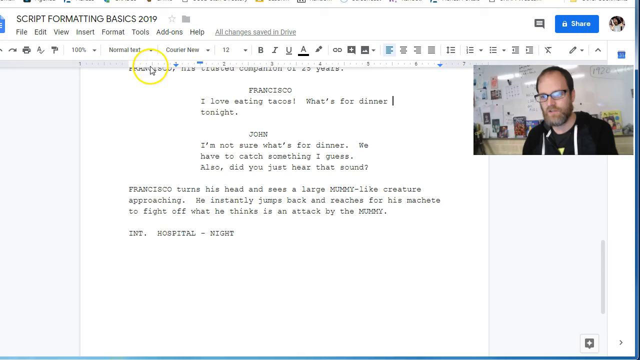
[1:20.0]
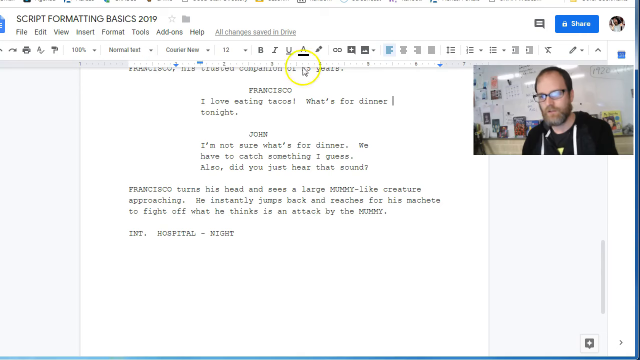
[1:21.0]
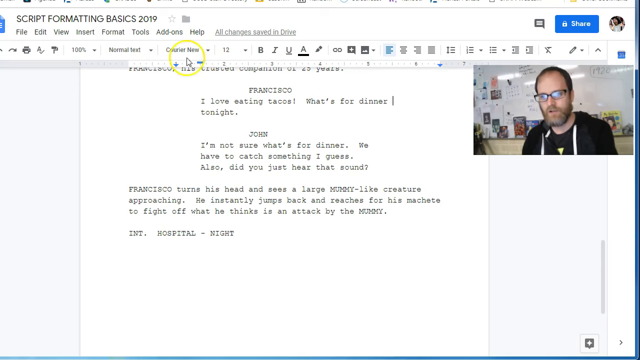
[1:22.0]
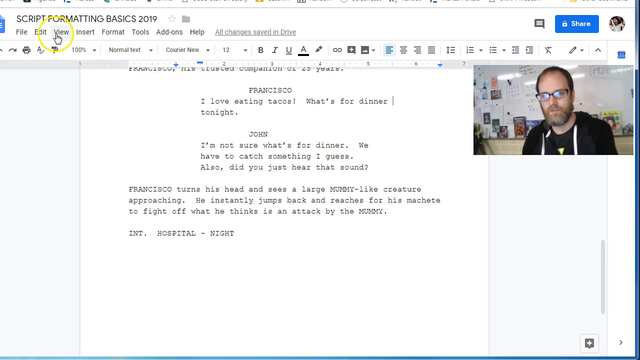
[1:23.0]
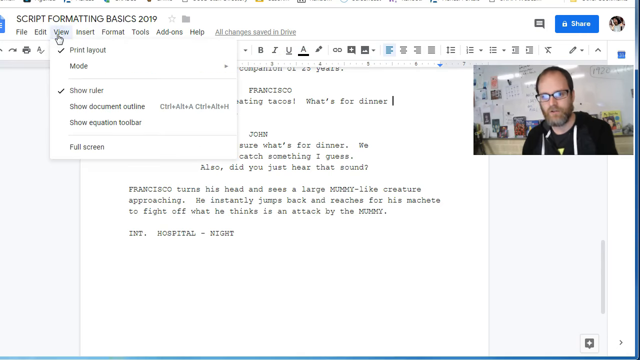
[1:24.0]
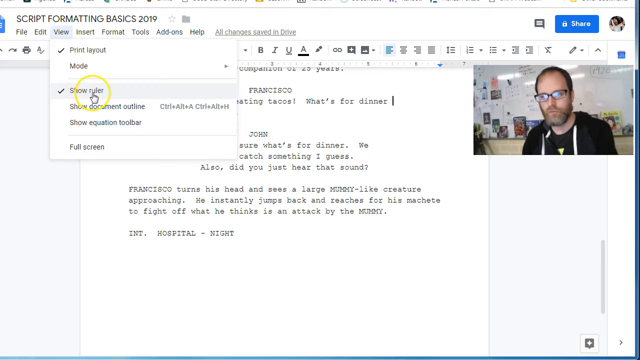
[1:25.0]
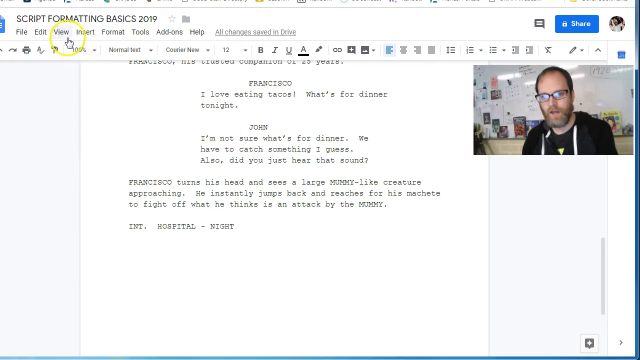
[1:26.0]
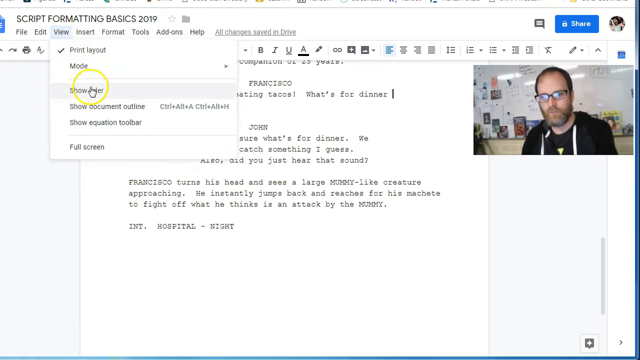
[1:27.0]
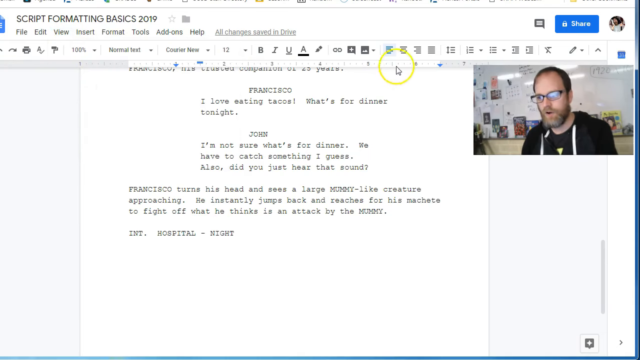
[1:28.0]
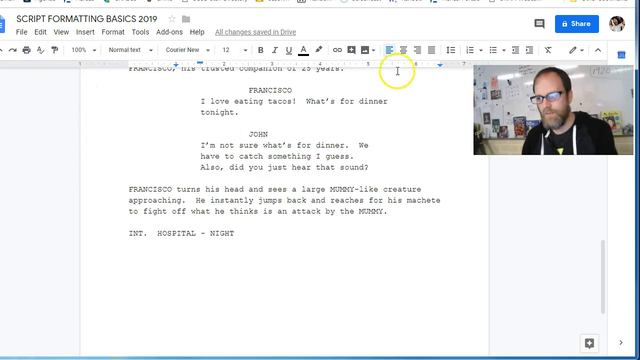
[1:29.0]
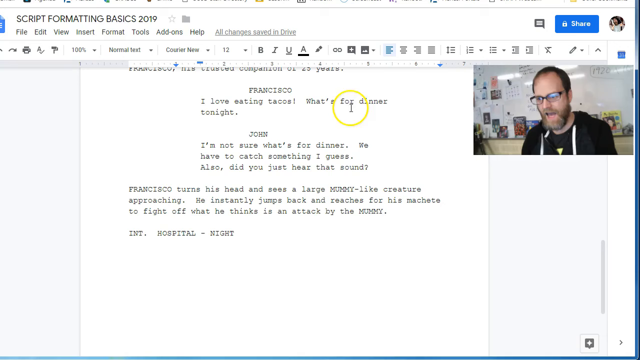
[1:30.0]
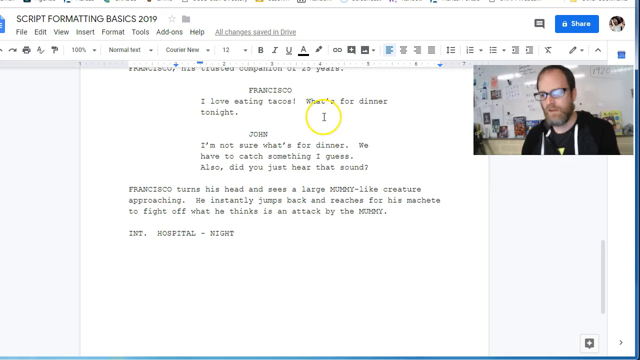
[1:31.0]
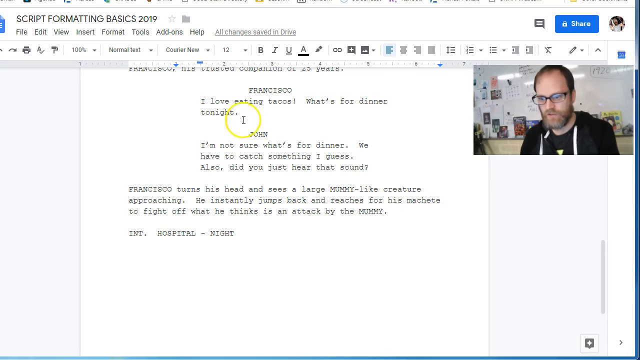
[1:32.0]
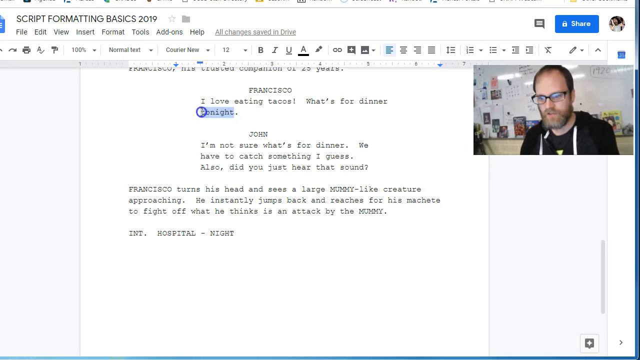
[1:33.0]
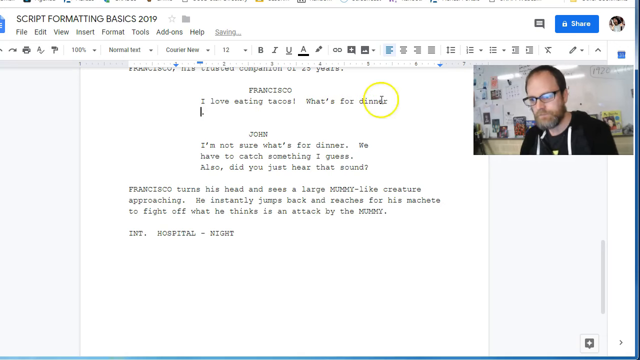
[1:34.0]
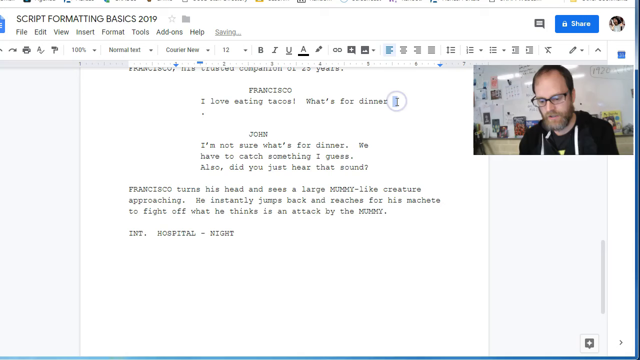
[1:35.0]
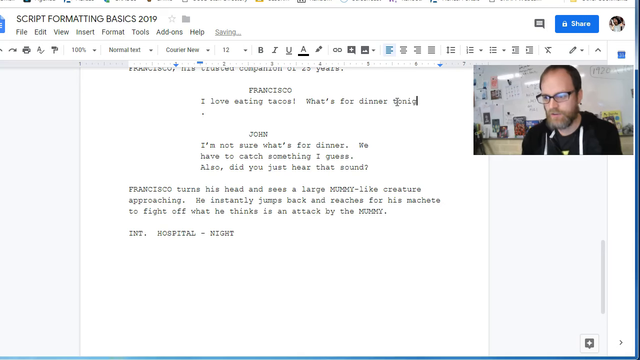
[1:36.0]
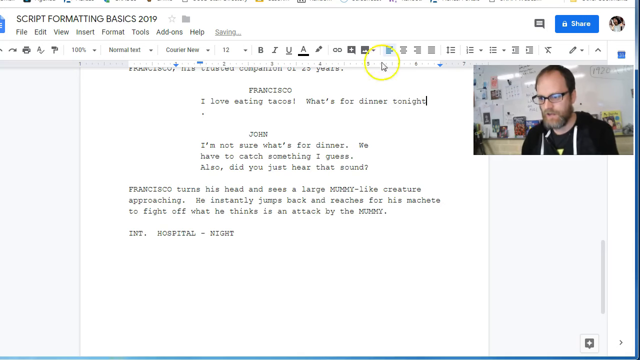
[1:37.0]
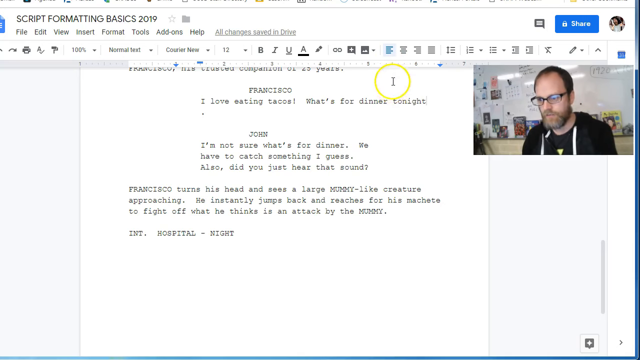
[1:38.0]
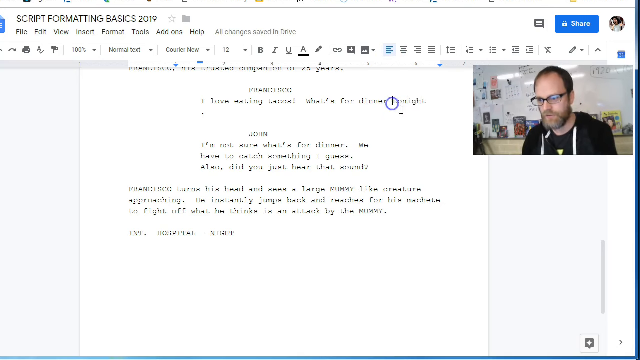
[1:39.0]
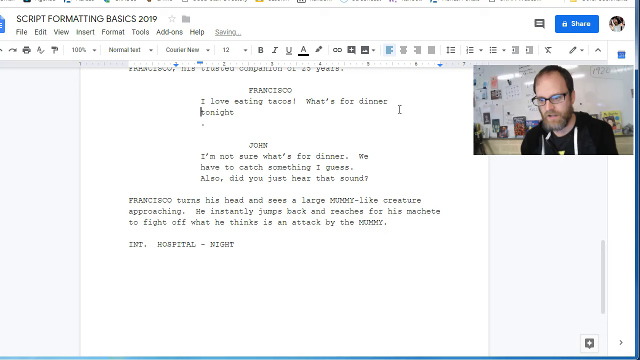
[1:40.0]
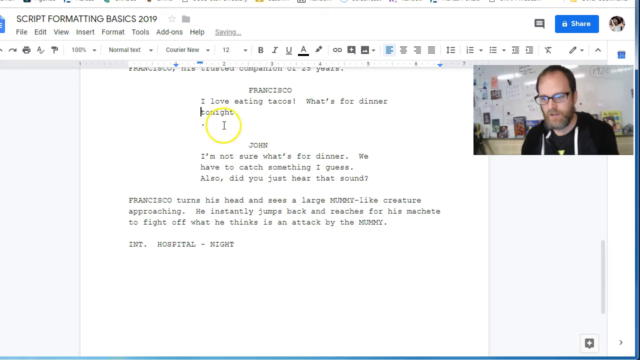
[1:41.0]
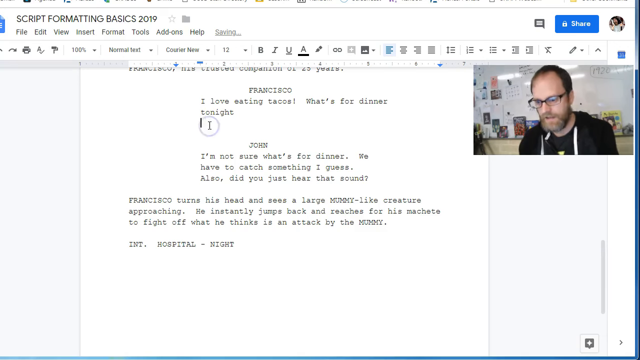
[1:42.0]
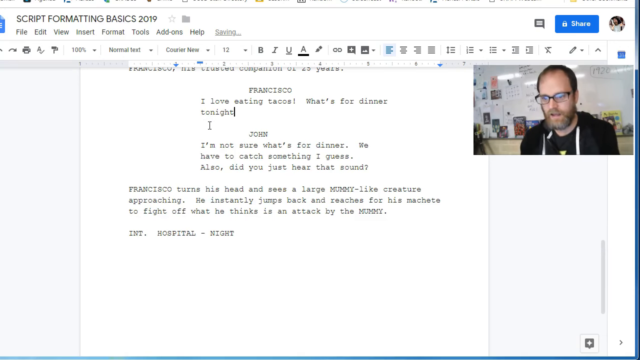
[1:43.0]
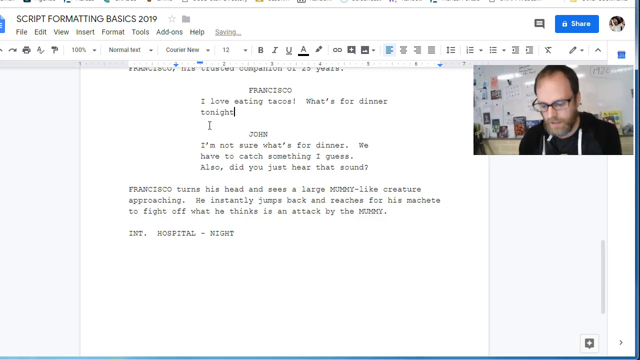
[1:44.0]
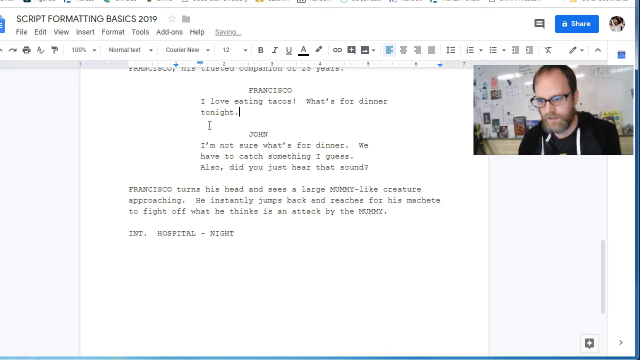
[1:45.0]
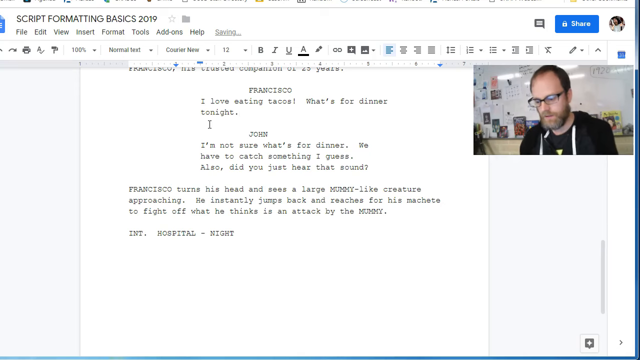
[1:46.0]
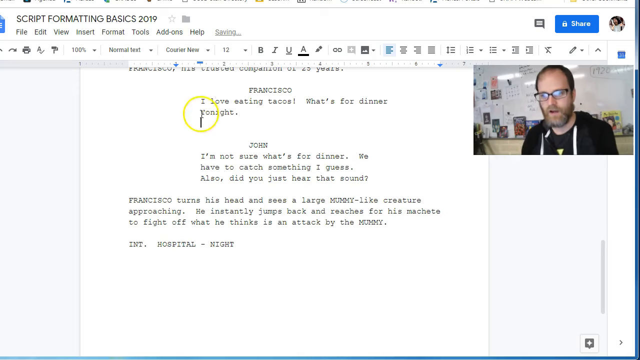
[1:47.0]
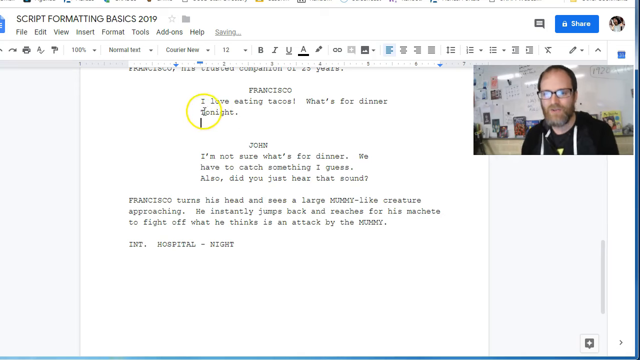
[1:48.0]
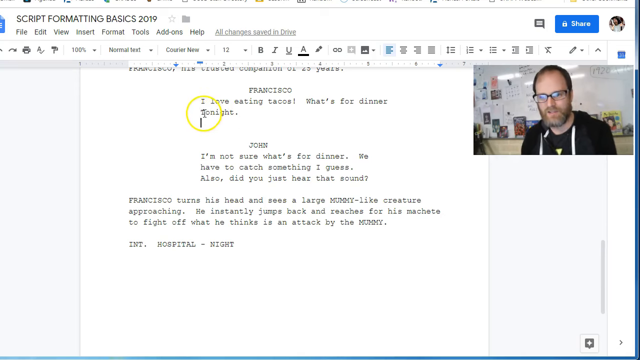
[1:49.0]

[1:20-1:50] Behind the man is a white dry-erase board with black writing, and to the right it says "1920". On the metal tray along the bottom of the board are books, two to his right and two to his left, and it looks like magnets hold up various sheets of paper. Below the board appears to be very light-colored white brick with white caulk or grout. He has a receding hairline about midway up, oval black-framed glasses, and a reddish beard that is not too thick and a bit more whitish around the chin. He is not facing straight on, tilting a little to his right as he speaks. He moves the cursor back and forth over the ruler, then clicks View, which brings up several options. He chooses "show ruler", which removes the ruler at the top, then clicks "show ruler" again to bring it back. He highlights "night" and deletes it briefly, widens the margins so "tonight" fits on one line, and then the text goes back to how it was before.